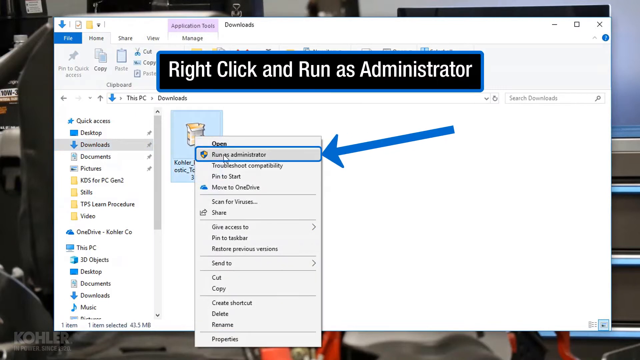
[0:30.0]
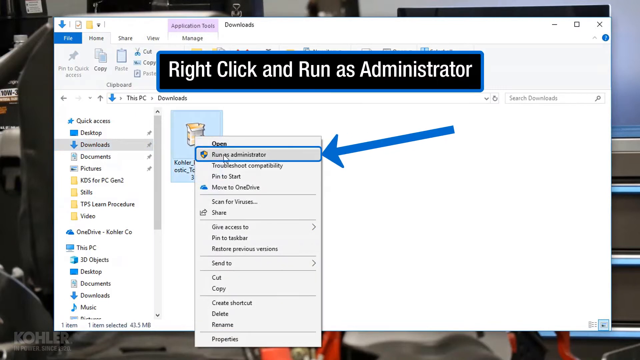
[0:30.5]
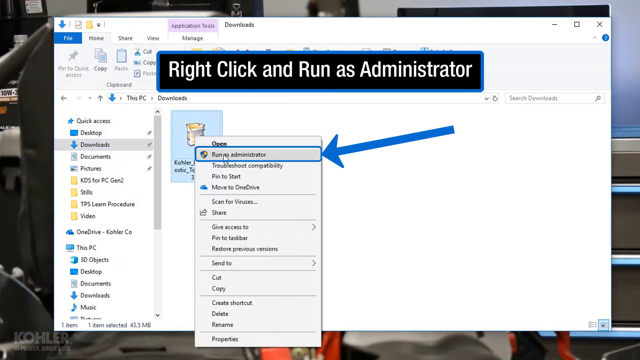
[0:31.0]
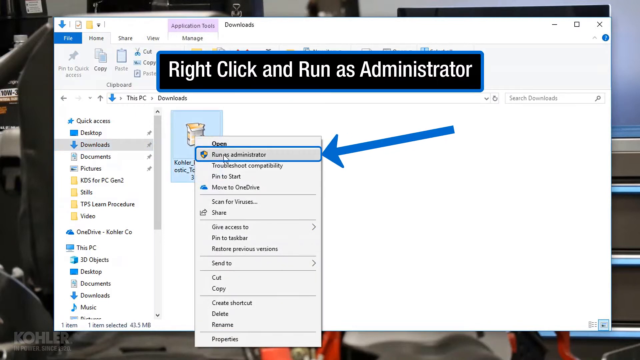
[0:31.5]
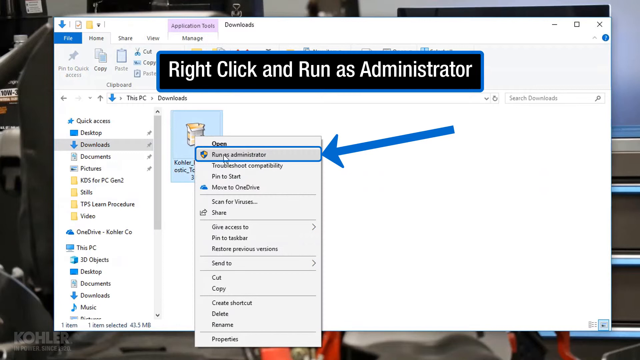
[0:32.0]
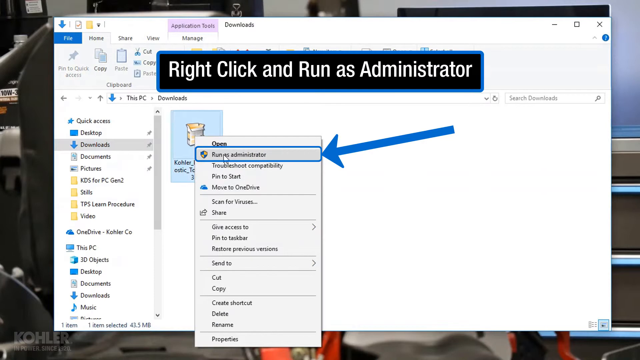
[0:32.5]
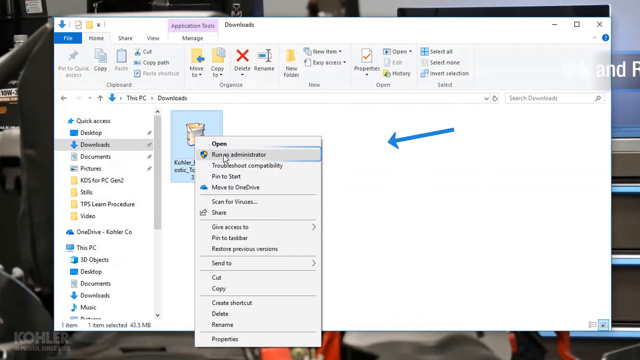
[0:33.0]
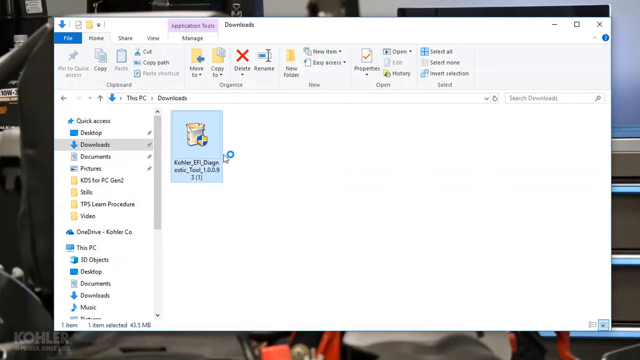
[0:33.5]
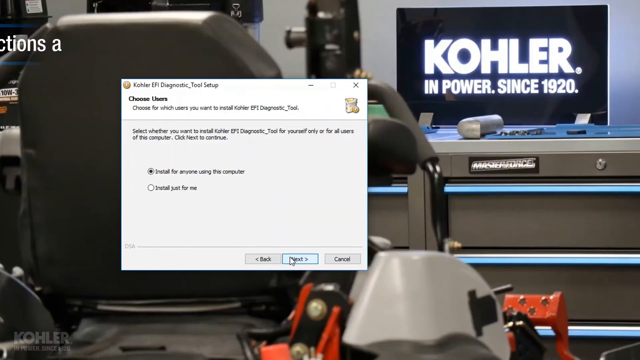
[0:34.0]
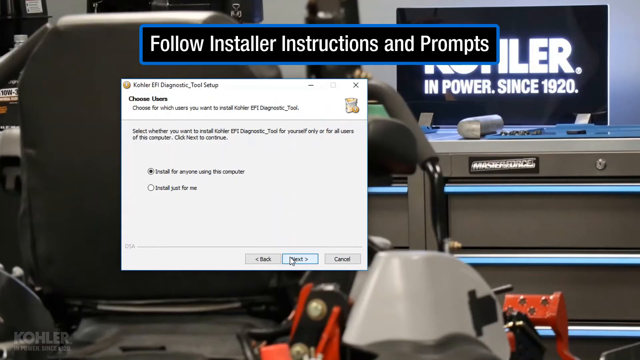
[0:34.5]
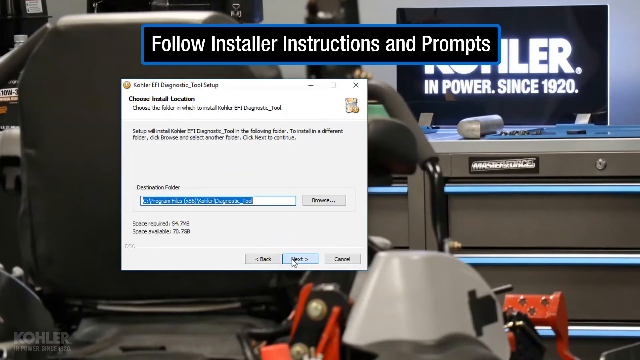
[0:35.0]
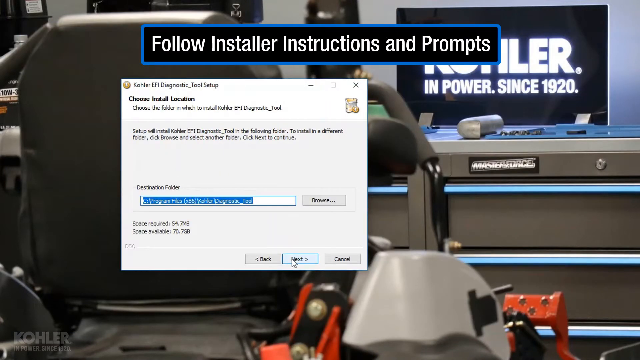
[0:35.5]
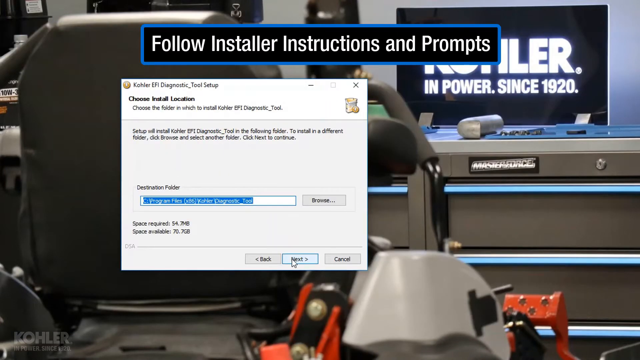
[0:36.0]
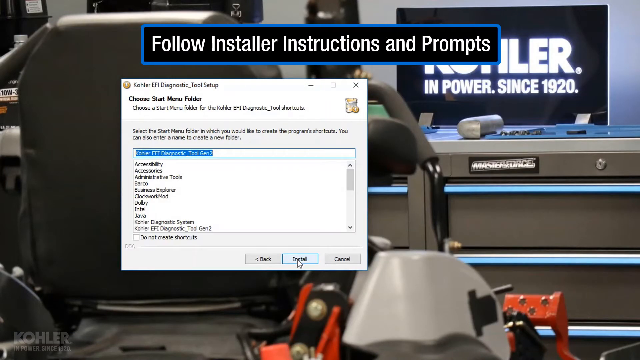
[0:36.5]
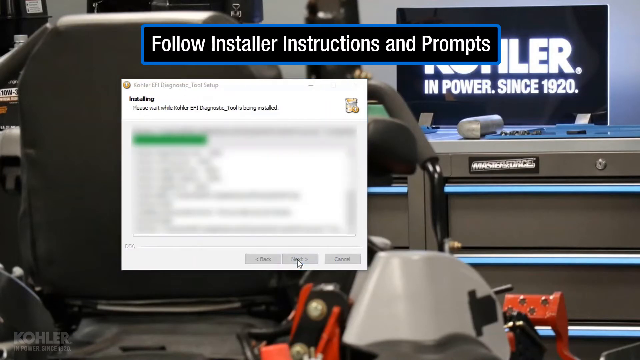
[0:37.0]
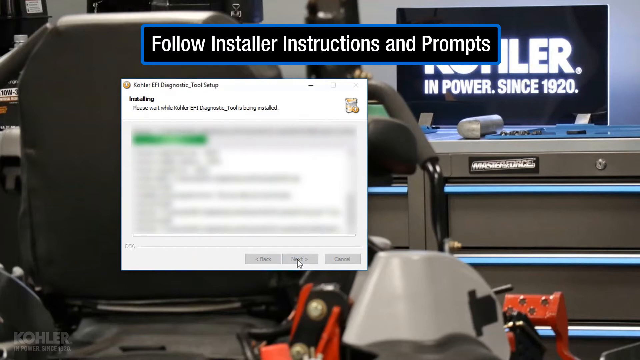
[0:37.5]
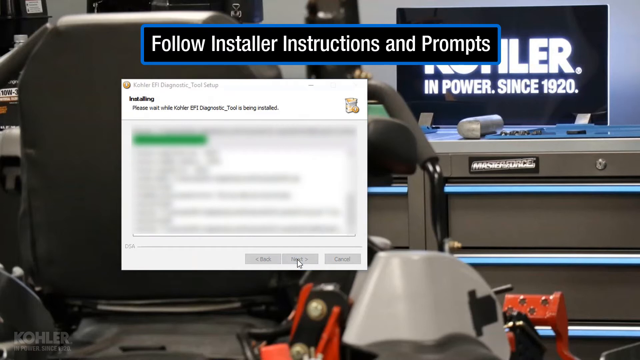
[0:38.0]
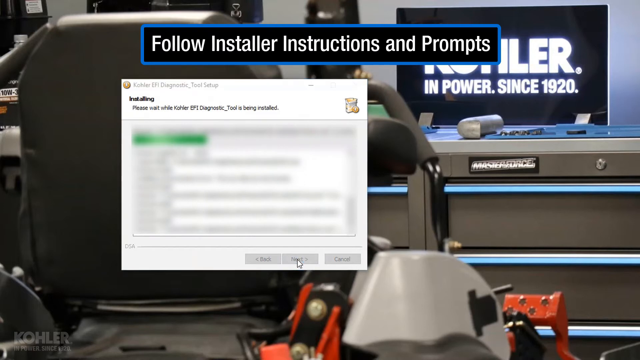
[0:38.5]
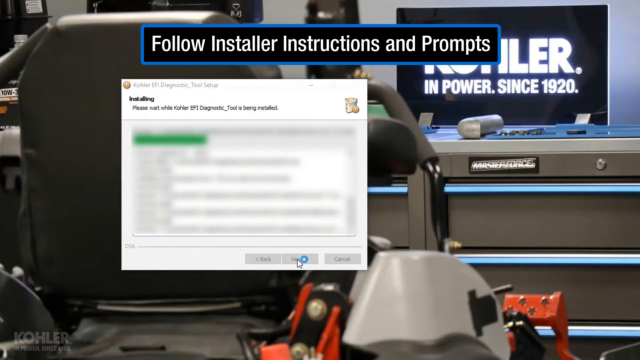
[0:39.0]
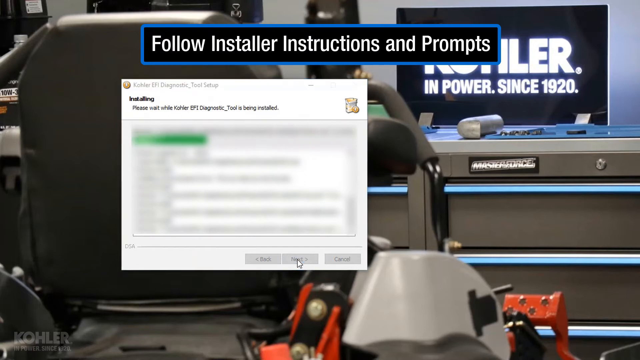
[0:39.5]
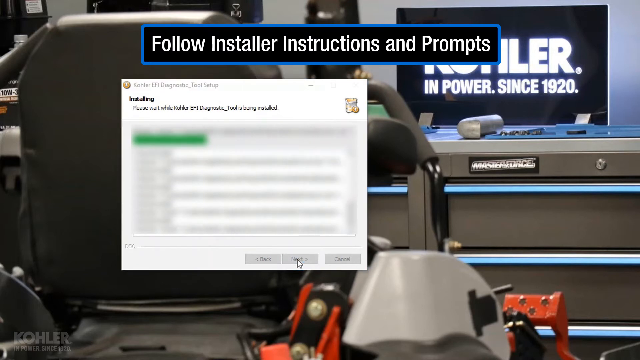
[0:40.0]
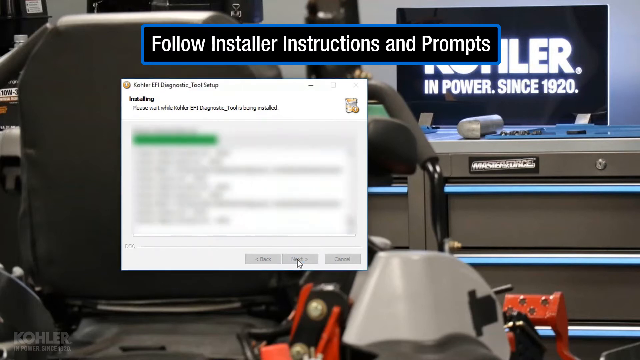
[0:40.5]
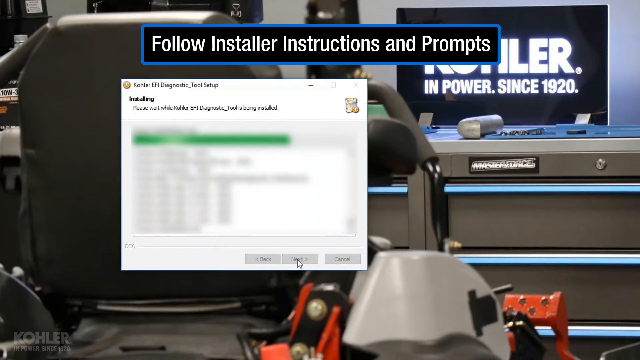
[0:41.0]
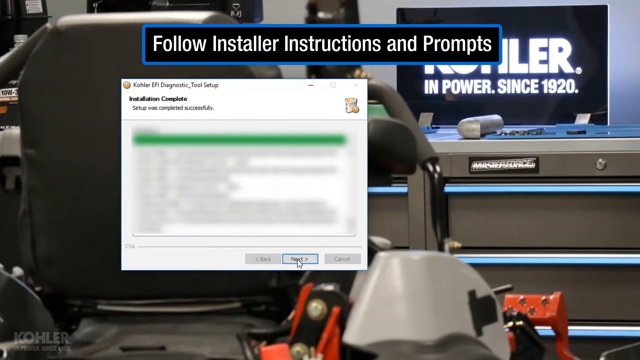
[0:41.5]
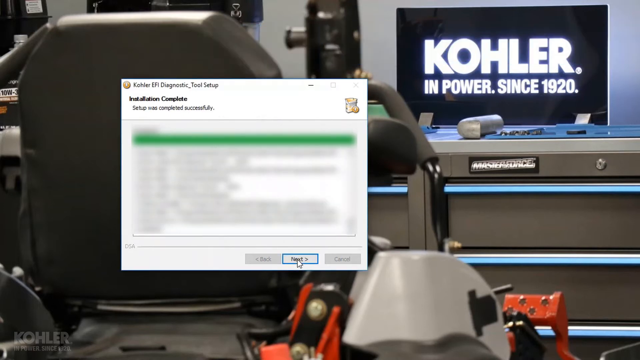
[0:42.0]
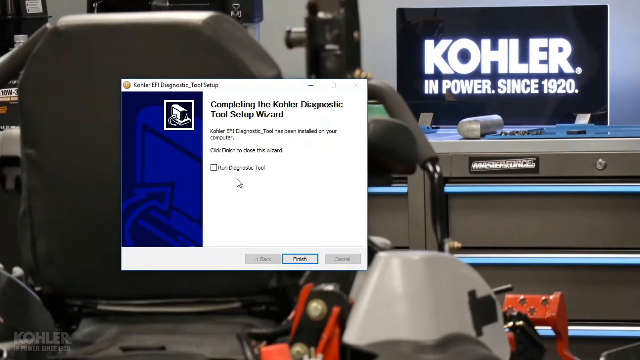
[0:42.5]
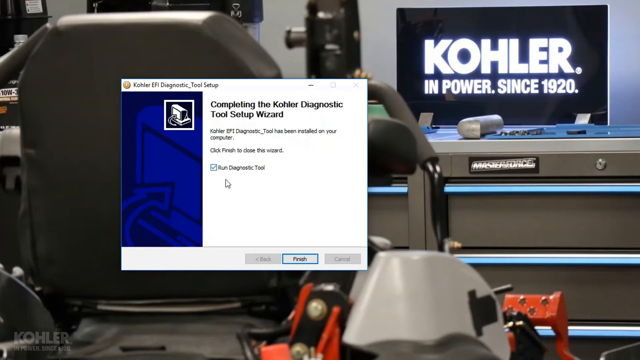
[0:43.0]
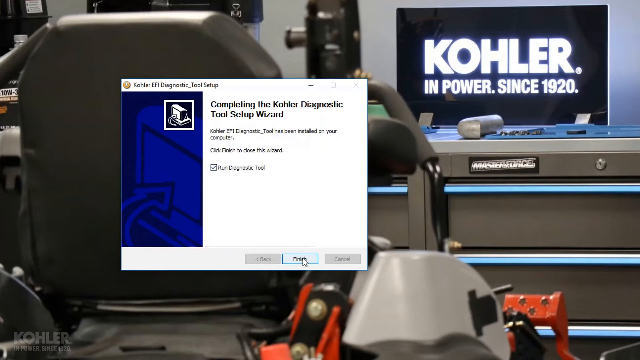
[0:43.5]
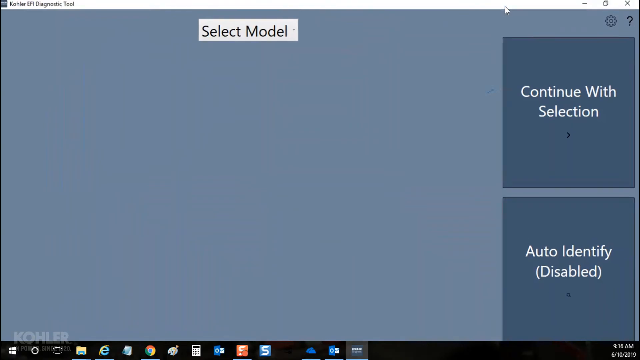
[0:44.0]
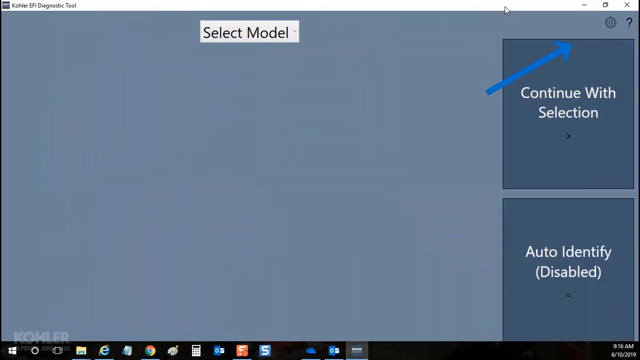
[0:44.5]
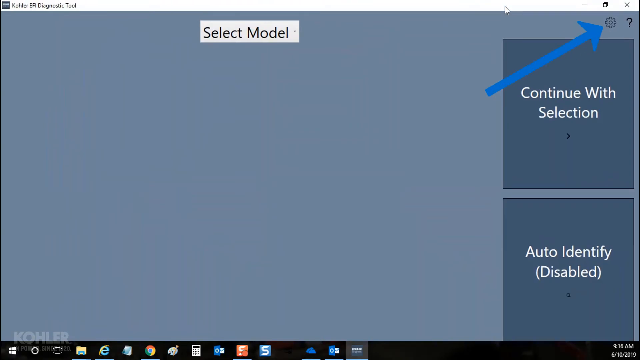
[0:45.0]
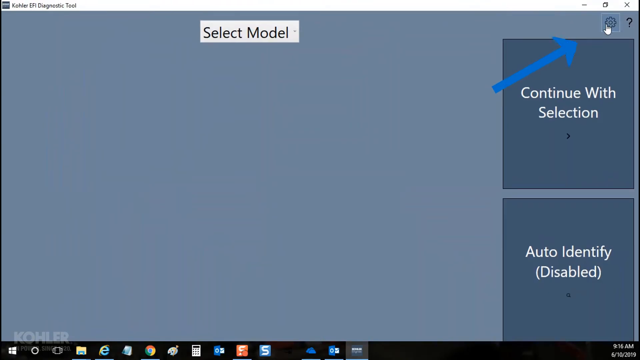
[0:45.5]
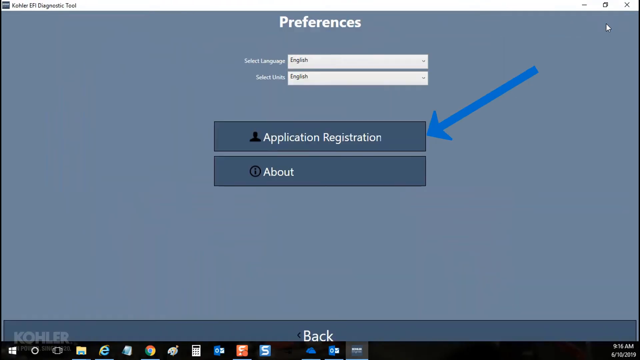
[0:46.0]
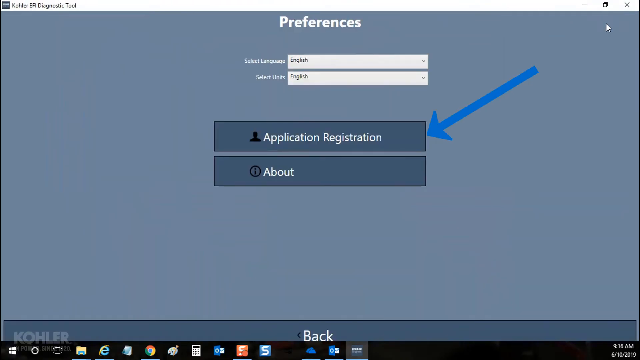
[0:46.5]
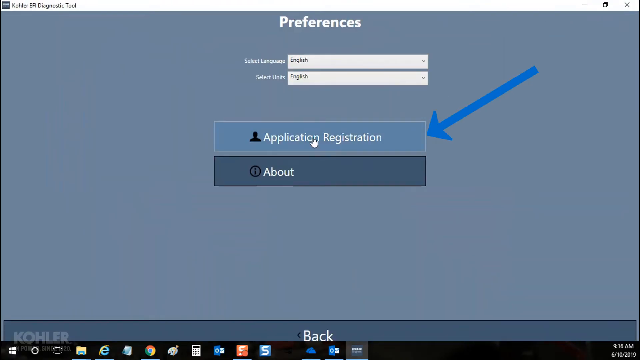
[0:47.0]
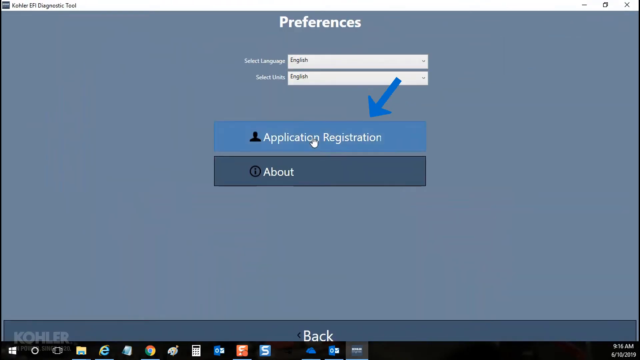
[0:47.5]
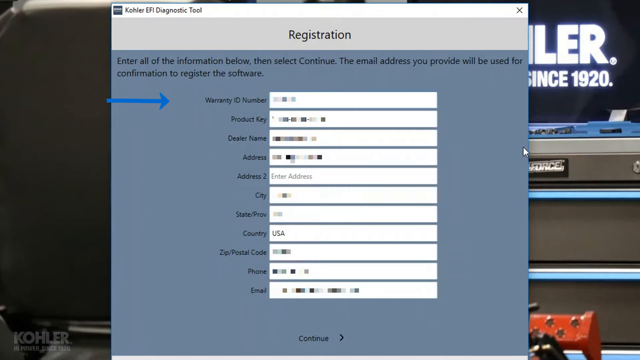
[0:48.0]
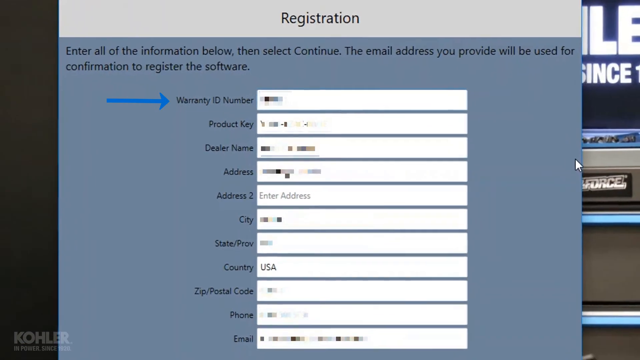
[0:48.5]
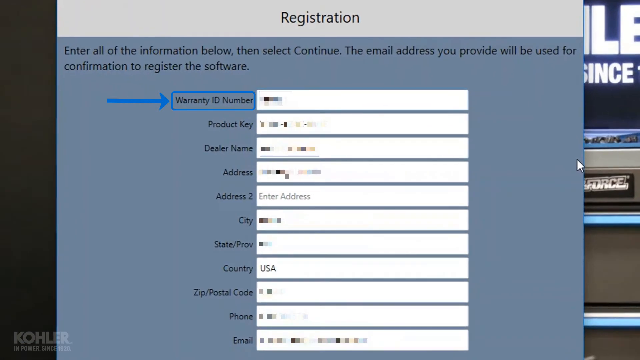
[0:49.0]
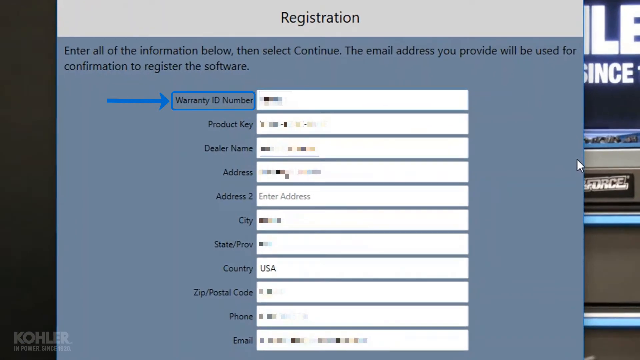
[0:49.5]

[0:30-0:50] Instructions show how to run the software after it has been downloaded: run as administrator, click next several times, then install. After installation, the directions are to open the software, go to settings and select application registration. An application registration form appears with fields for warranty ID number, product key, dealer's name, address, address 2, city, country, zip code, phone number and email. The details are entered and continue is selected, completing registration.